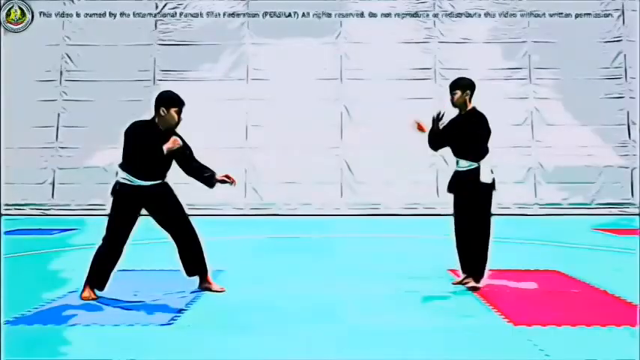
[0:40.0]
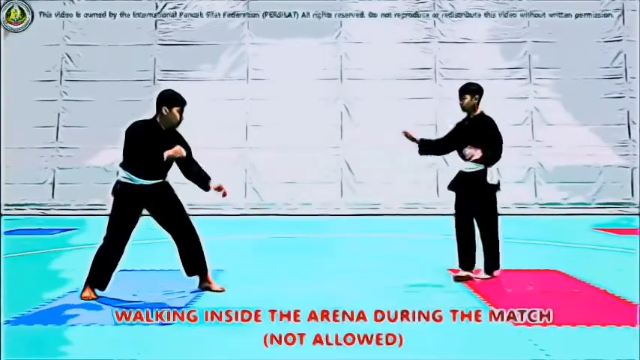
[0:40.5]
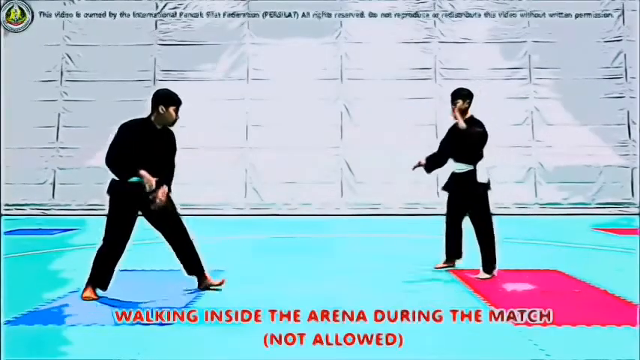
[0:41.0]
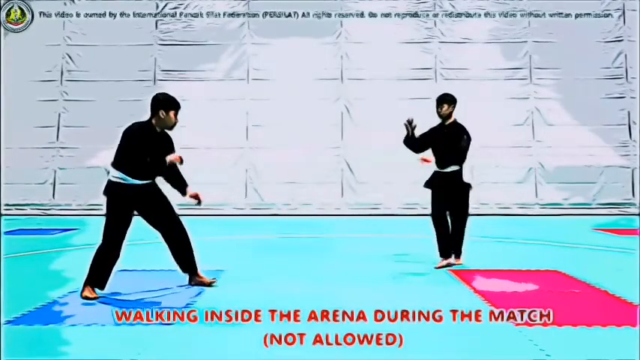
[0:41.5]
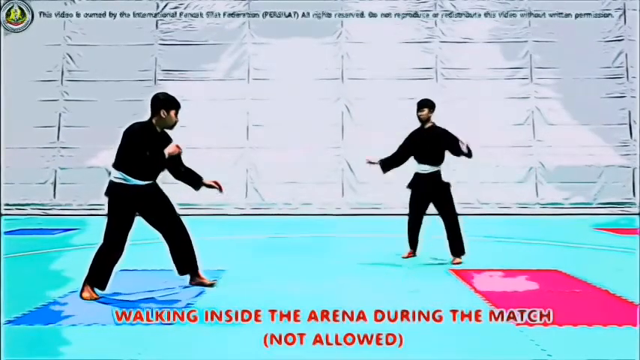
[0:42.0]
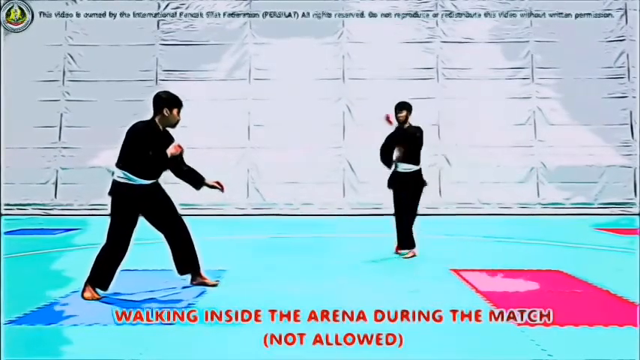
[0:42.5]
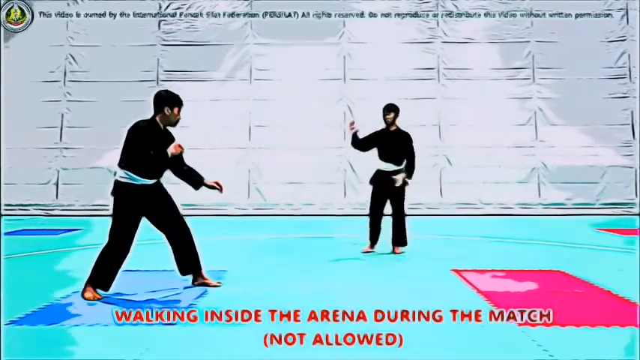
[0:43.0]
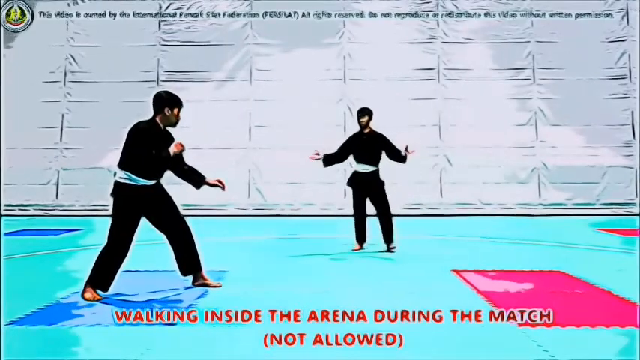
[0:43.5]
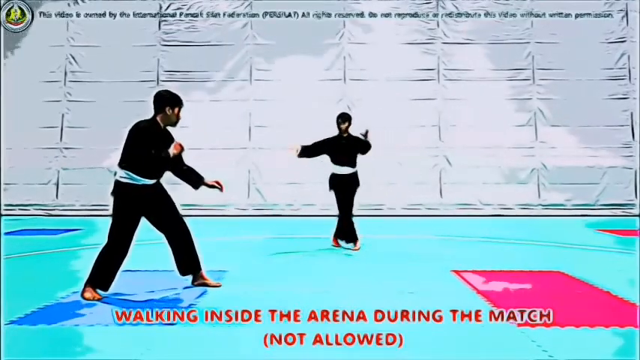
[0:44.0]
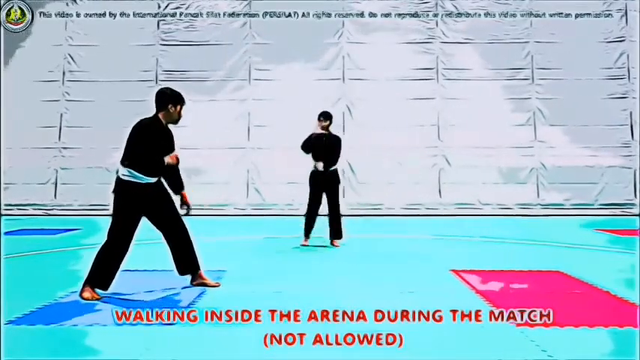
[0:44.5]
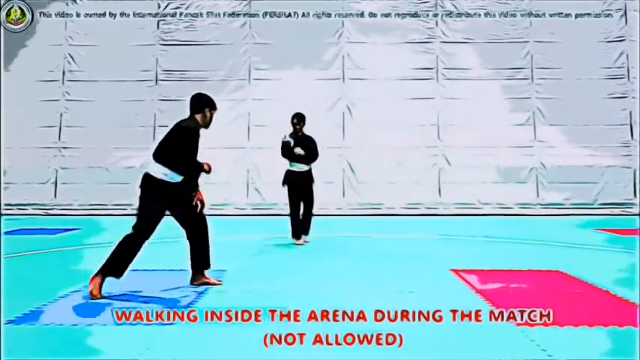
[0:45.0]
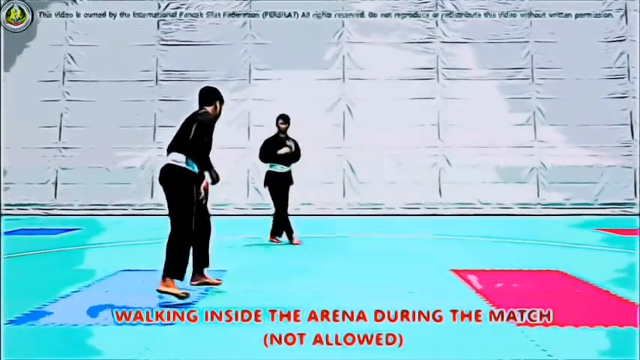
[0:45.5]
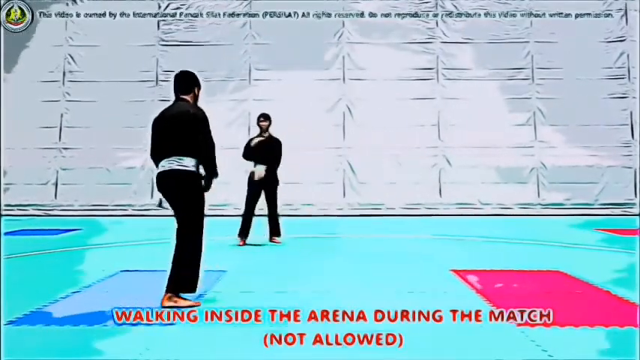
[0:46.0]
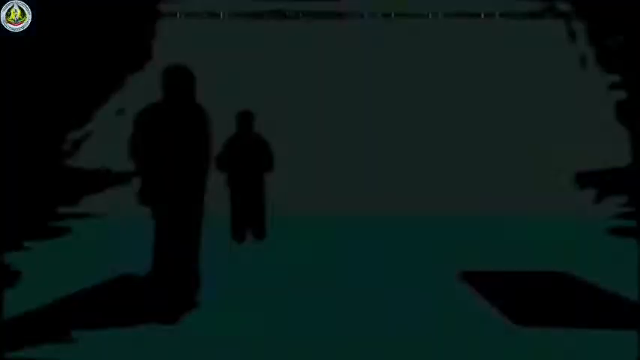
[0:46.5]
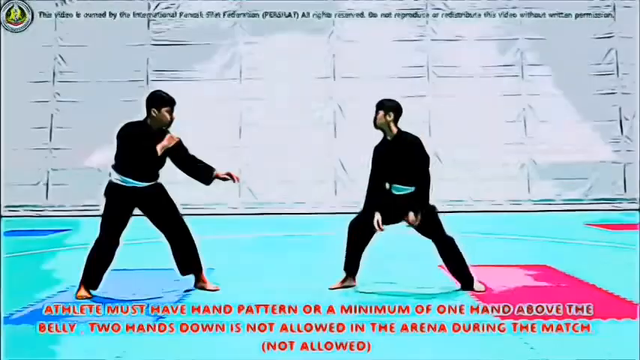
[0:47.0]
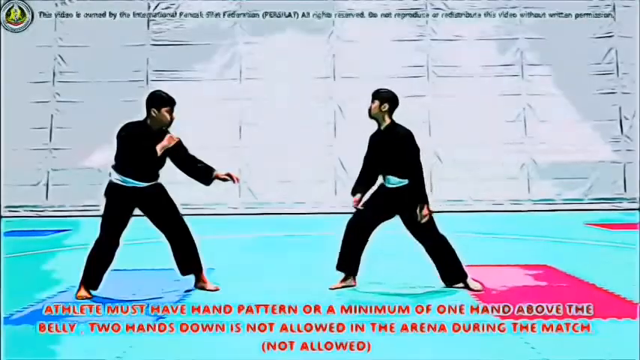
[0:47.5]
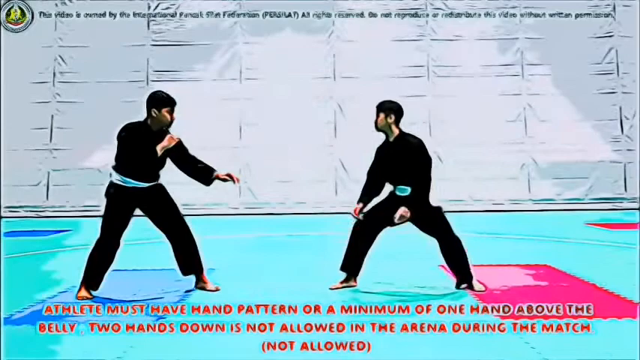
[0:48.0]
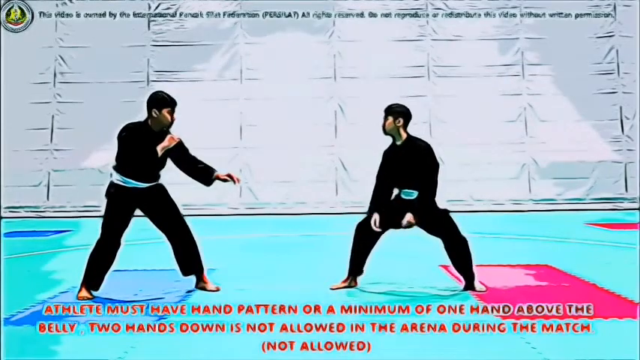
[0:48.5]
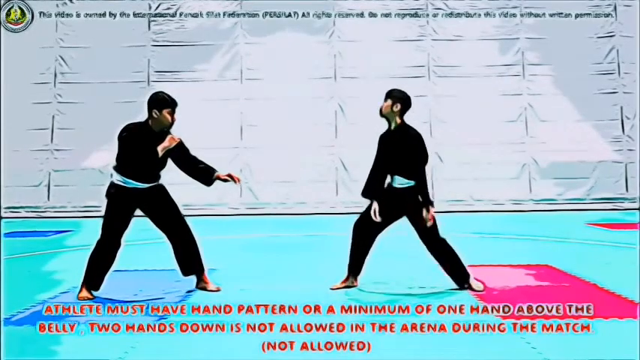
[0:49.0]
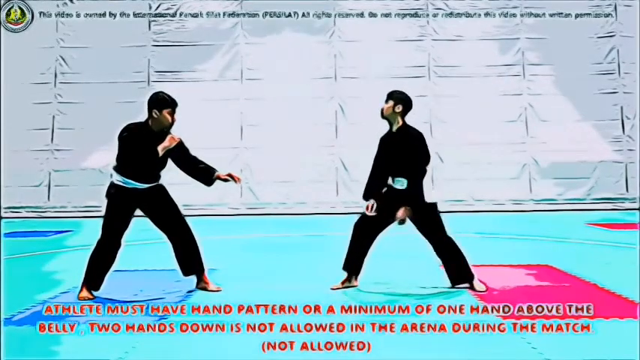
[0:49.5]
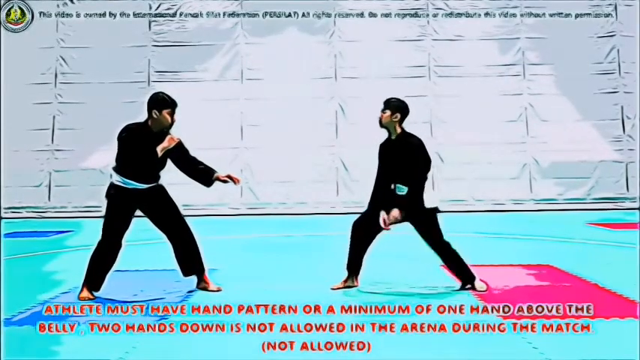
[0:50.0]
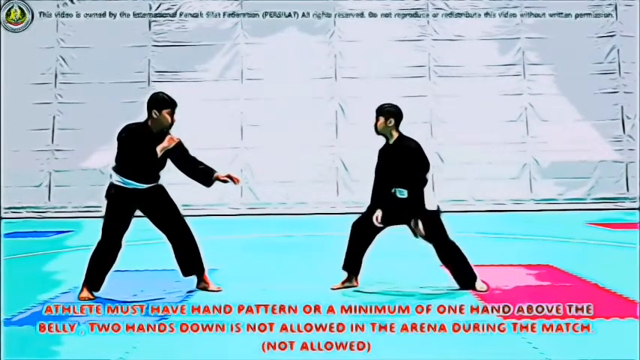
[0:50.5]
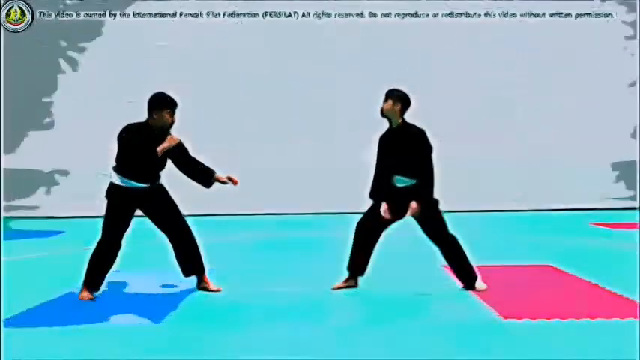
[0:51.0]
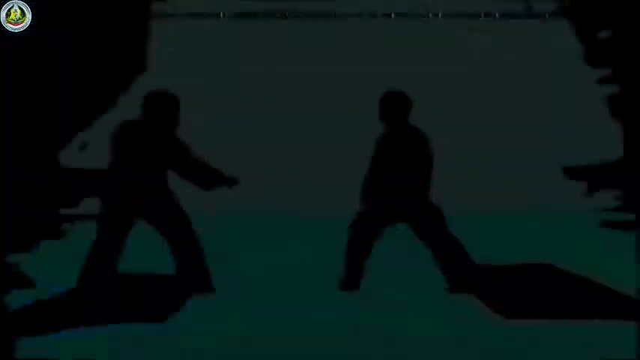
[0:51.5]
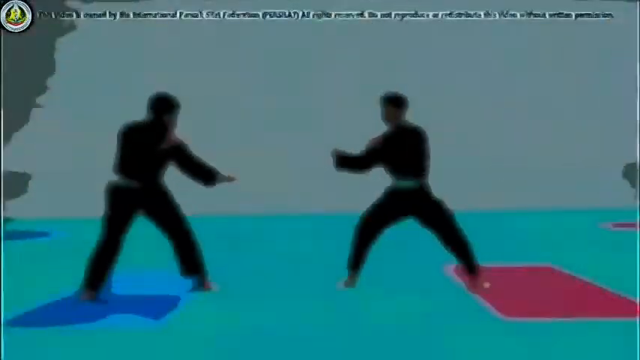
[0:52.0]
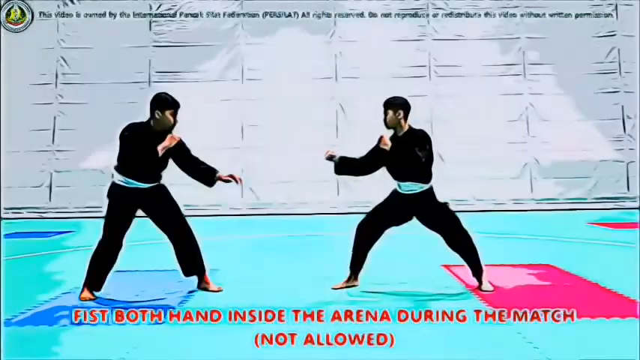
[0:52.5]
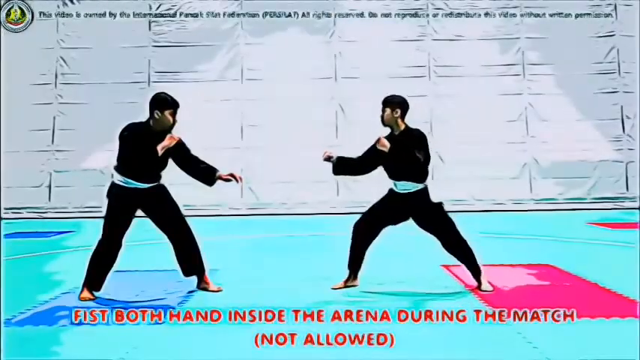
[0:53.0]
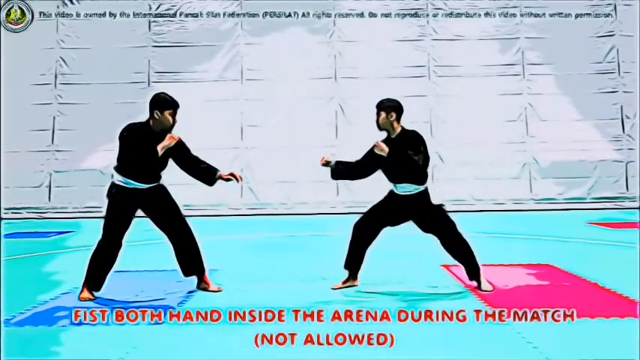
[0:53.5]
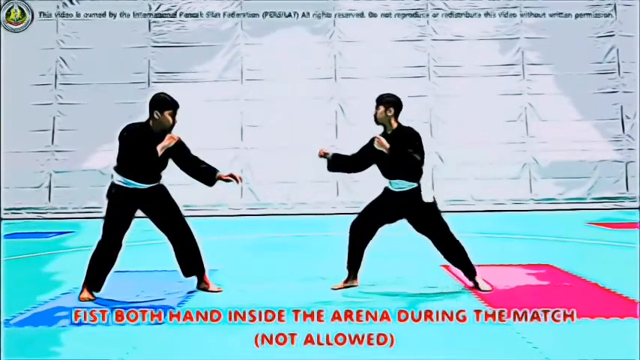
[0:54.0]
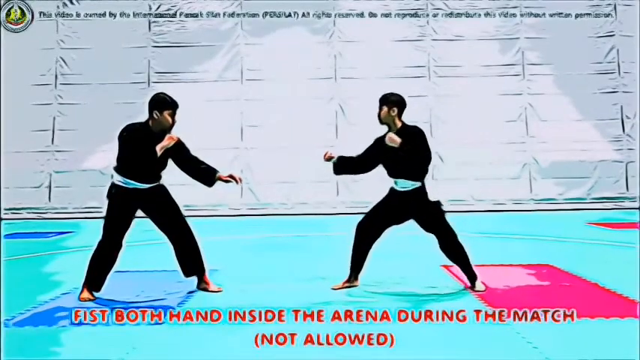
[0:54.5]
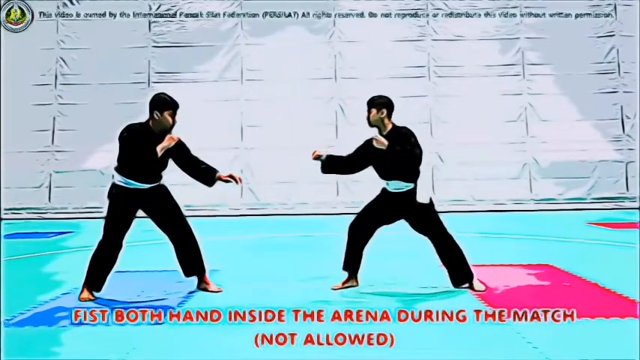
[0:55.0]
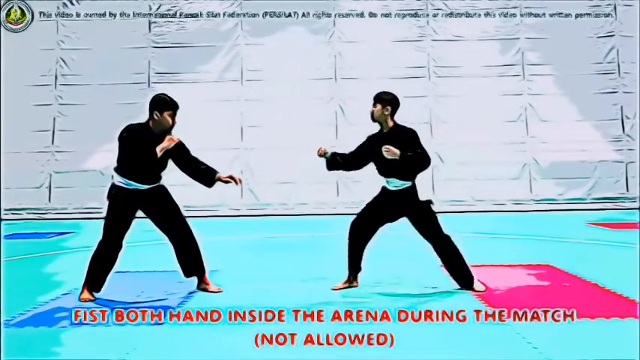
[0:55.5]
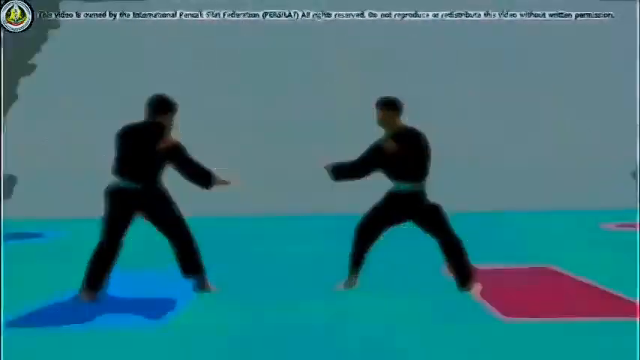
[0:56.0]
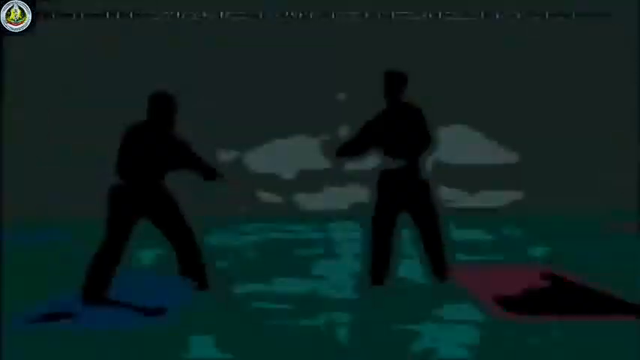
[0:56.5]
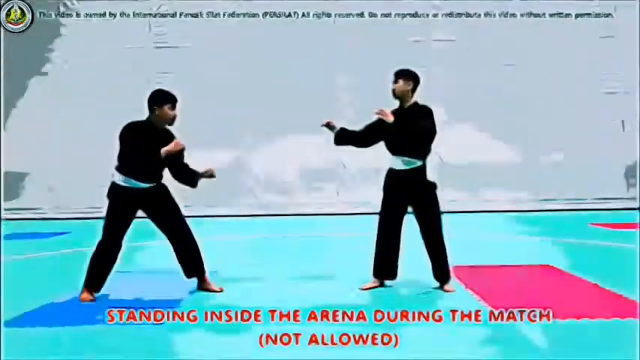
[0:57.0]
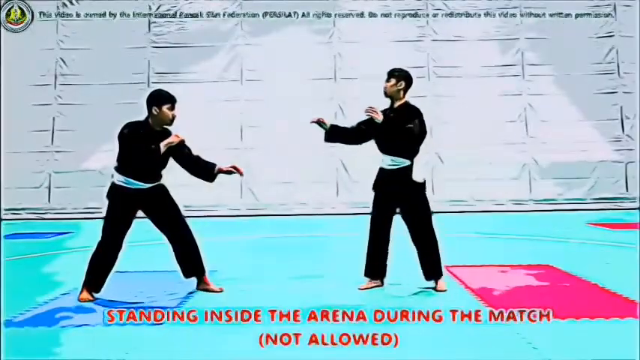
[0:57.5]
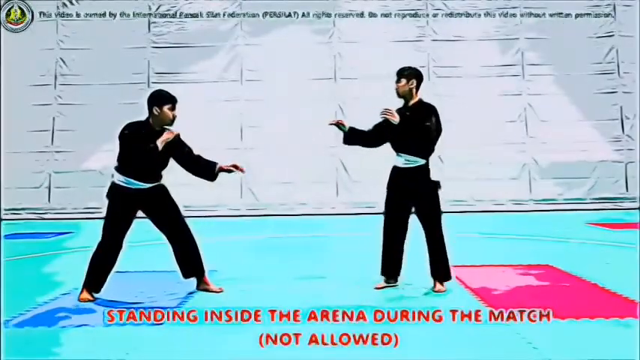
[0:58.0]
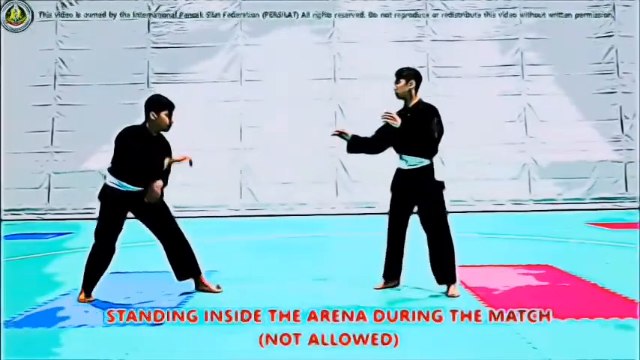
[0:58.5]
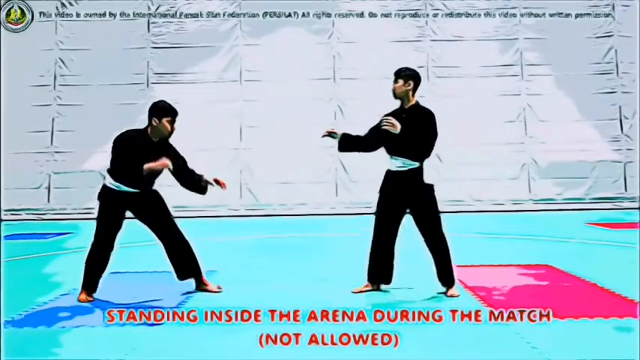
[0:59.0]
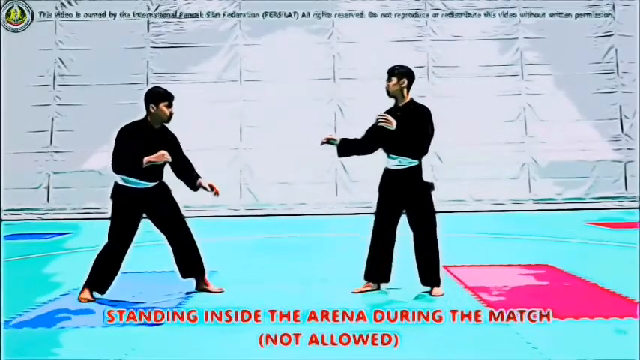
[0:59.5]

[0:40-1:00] Rules appear on screen: "walking inside the arena during the match, not allowed", "standing inside the arena during the match not allowed", and "fist both hand inside the arena during the match", along with text stating that the athlete must have a minimum of one hand in a certain position. The two animated players appear to wear black uniforms with white belts.